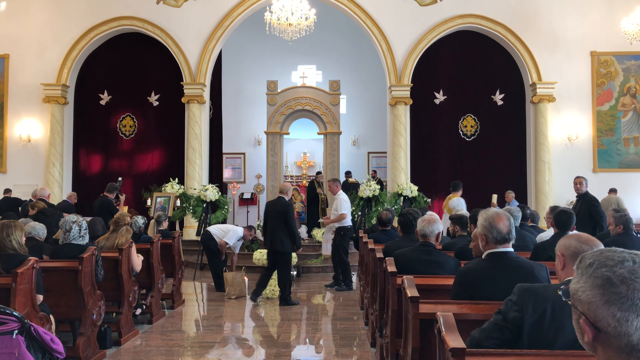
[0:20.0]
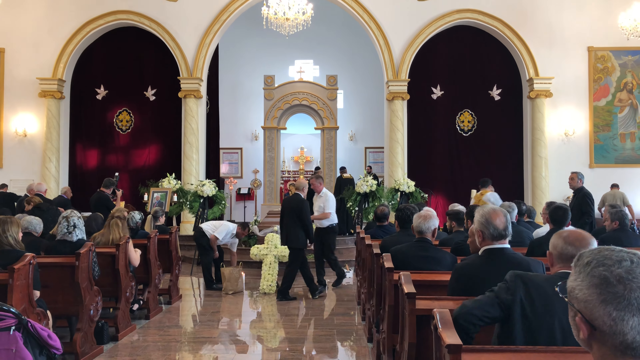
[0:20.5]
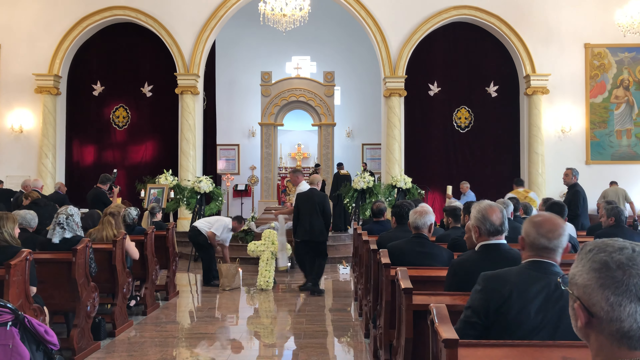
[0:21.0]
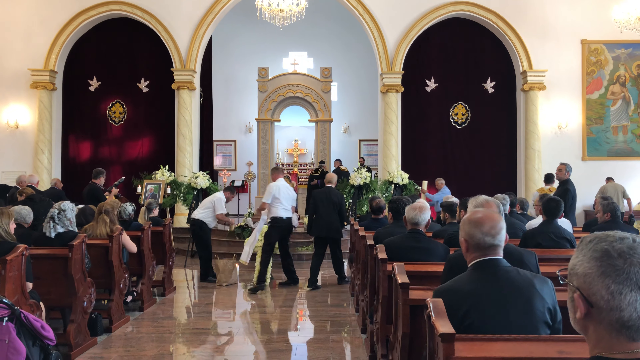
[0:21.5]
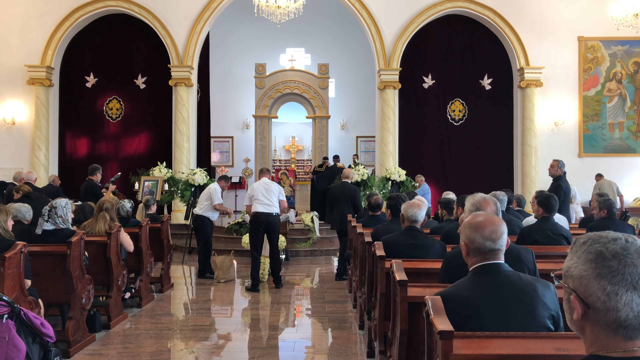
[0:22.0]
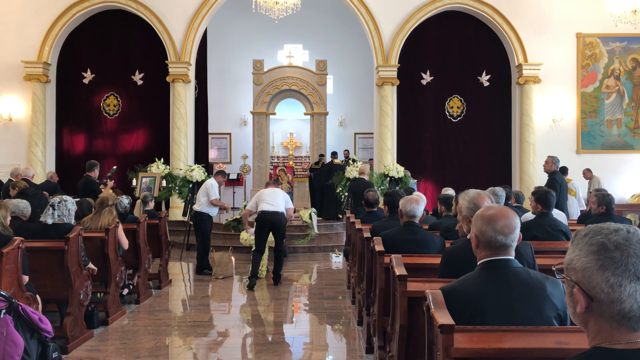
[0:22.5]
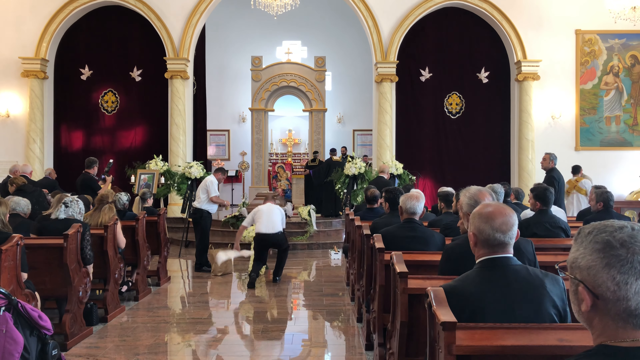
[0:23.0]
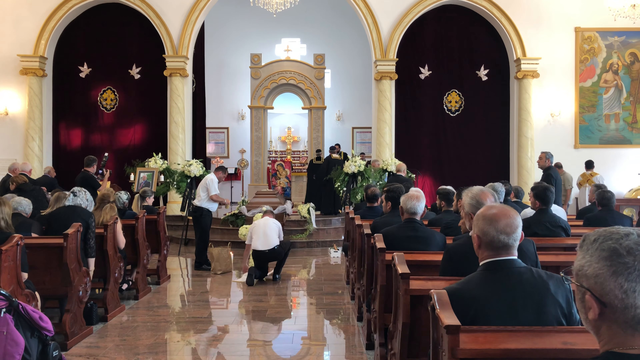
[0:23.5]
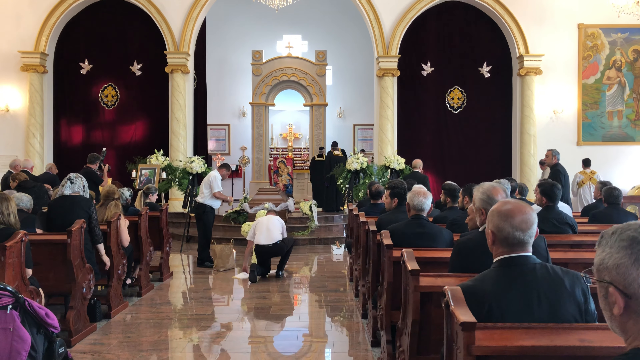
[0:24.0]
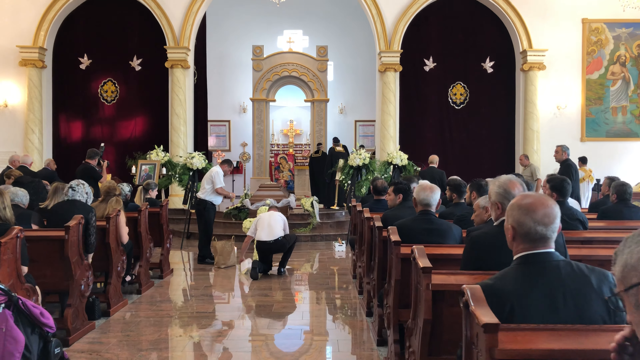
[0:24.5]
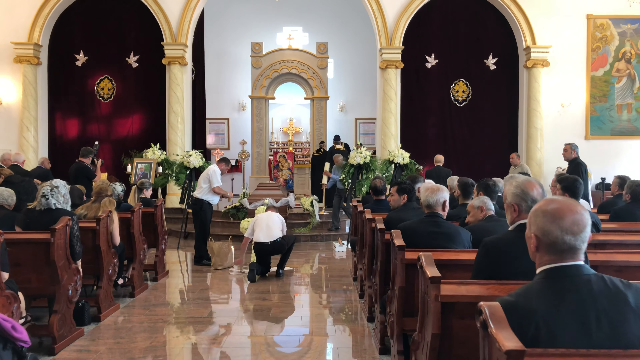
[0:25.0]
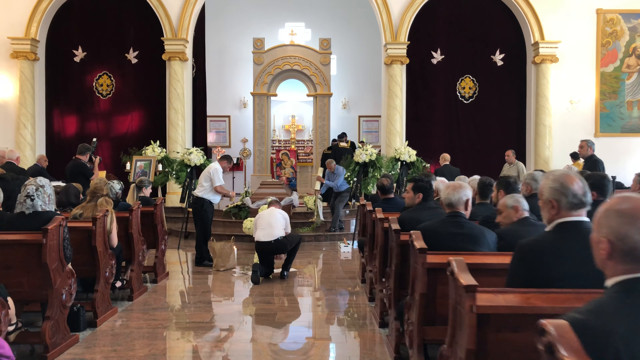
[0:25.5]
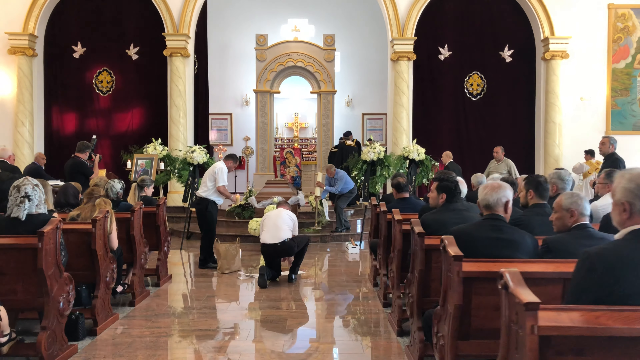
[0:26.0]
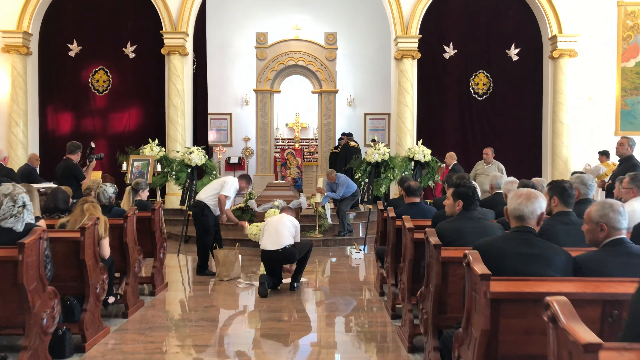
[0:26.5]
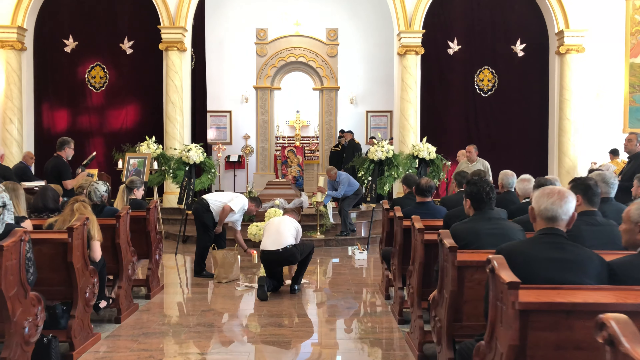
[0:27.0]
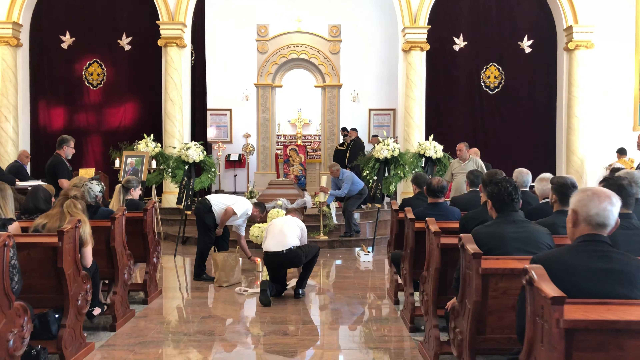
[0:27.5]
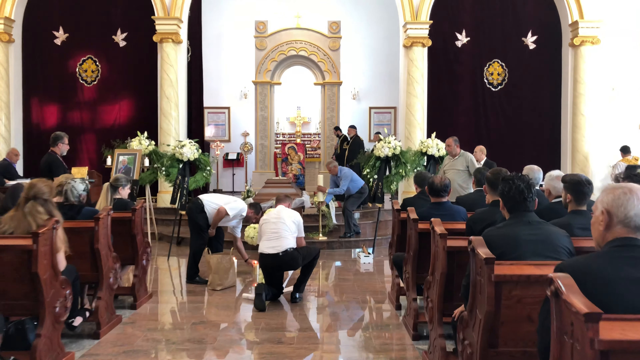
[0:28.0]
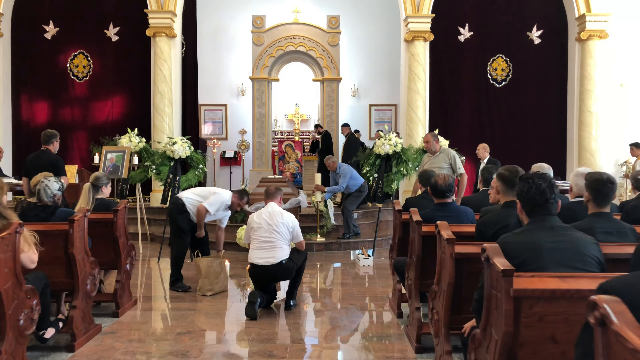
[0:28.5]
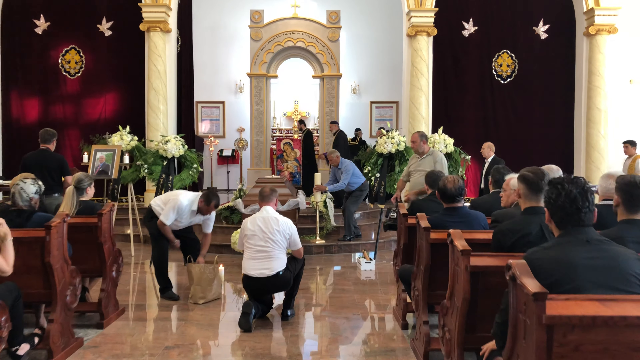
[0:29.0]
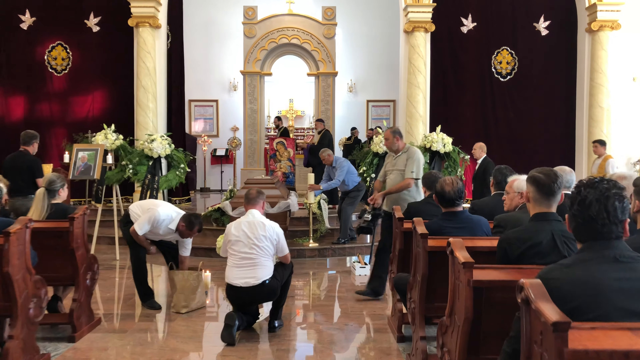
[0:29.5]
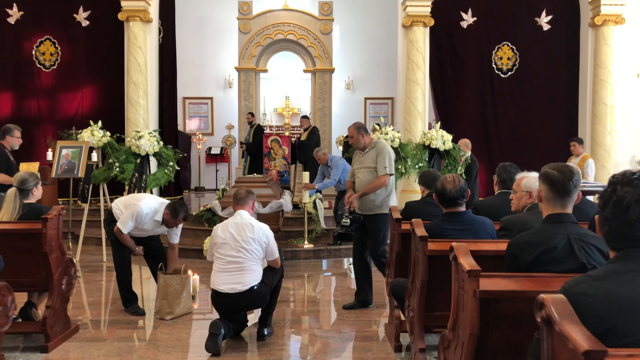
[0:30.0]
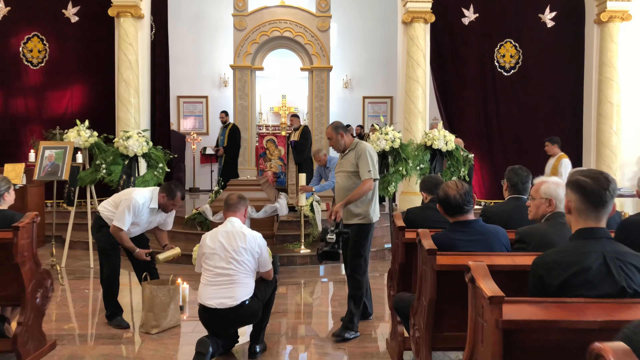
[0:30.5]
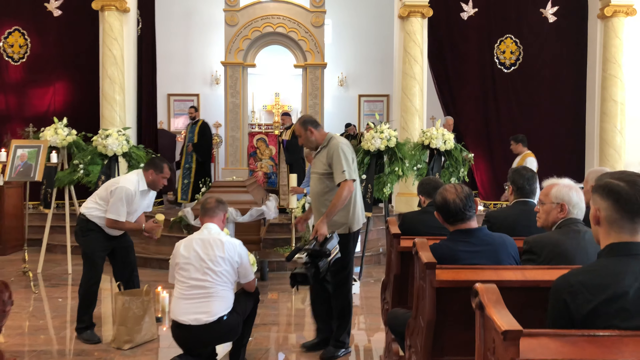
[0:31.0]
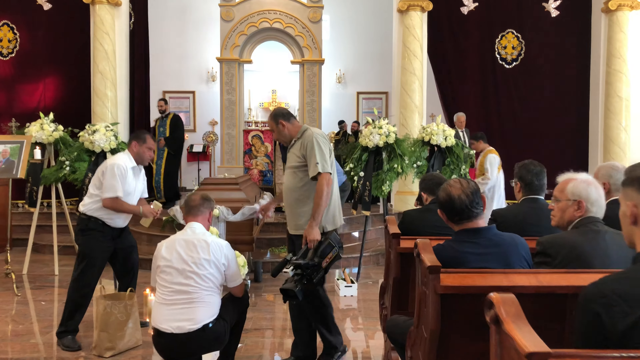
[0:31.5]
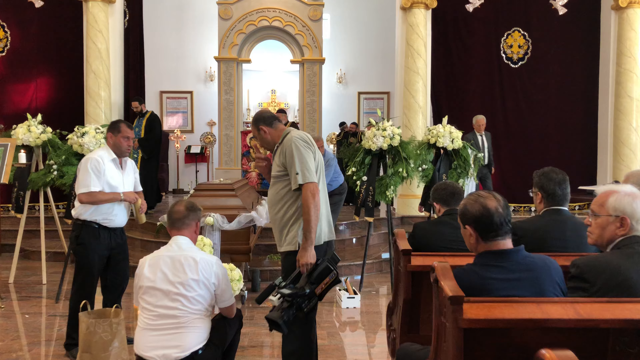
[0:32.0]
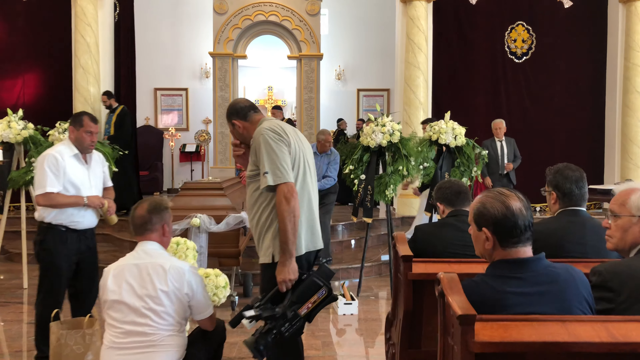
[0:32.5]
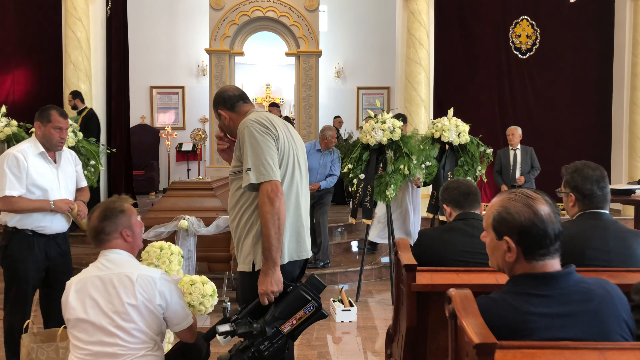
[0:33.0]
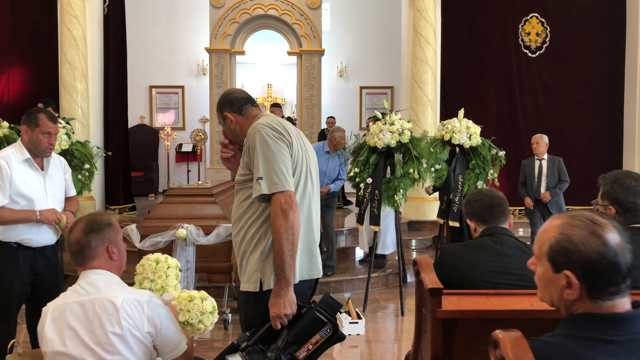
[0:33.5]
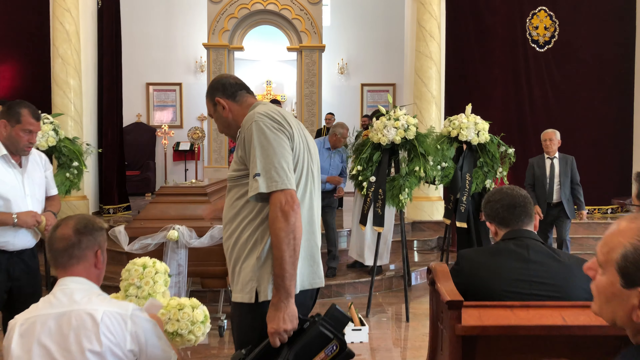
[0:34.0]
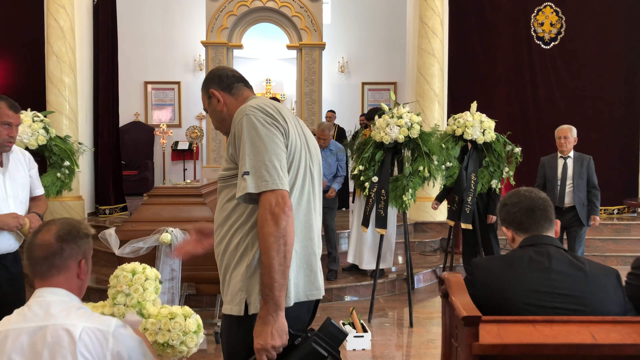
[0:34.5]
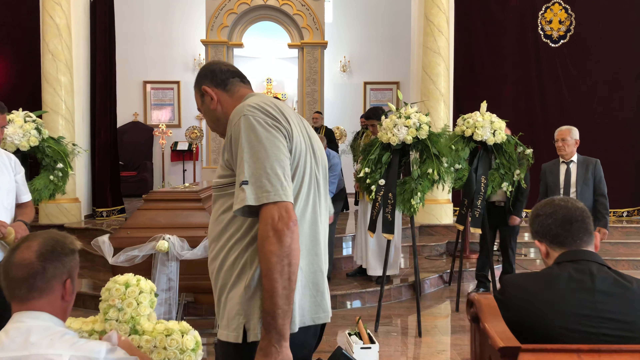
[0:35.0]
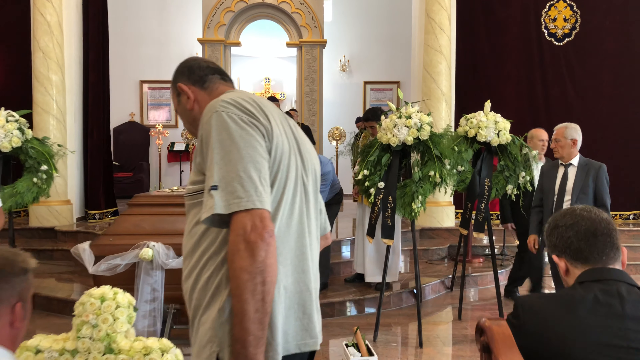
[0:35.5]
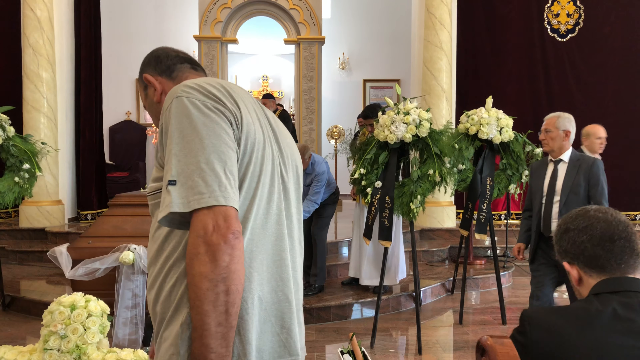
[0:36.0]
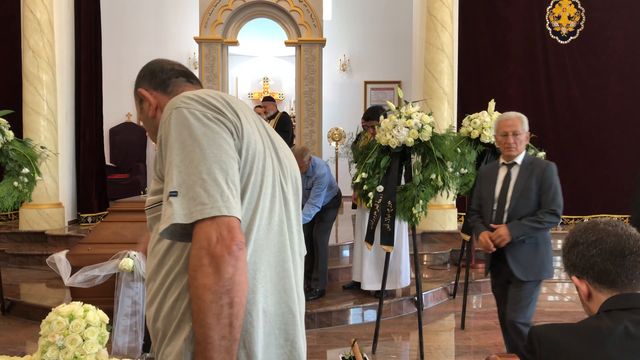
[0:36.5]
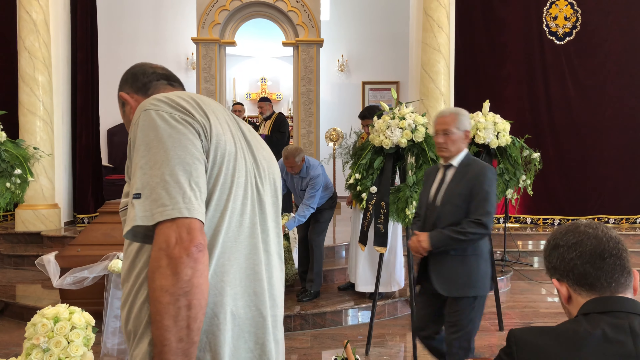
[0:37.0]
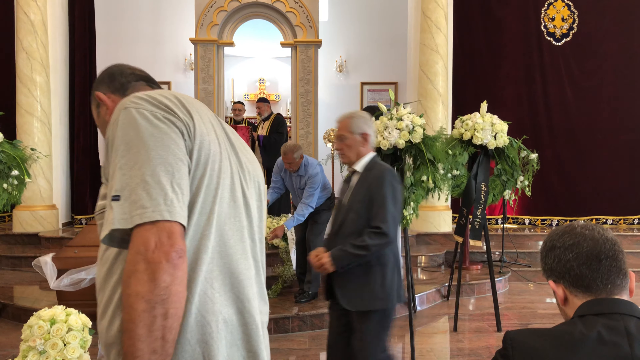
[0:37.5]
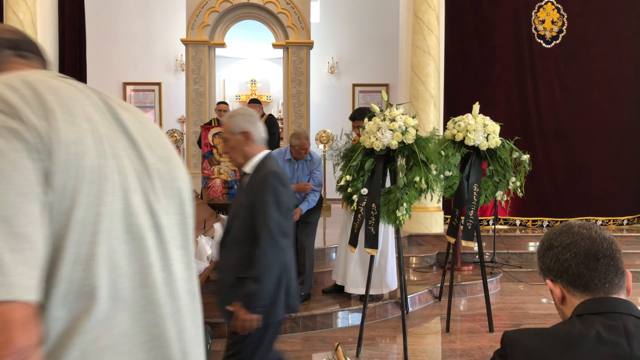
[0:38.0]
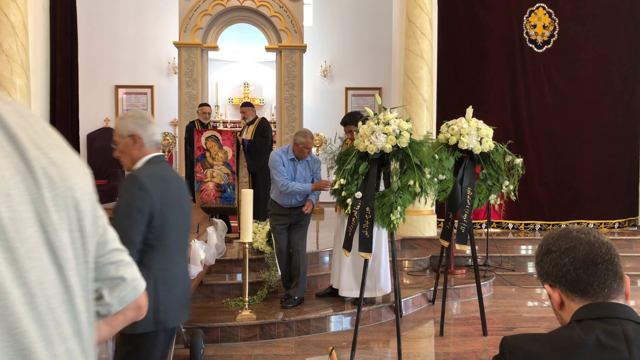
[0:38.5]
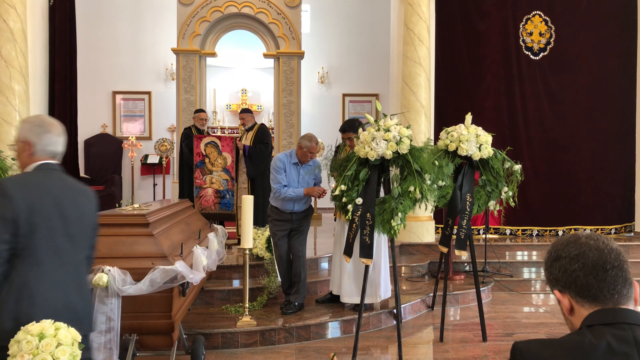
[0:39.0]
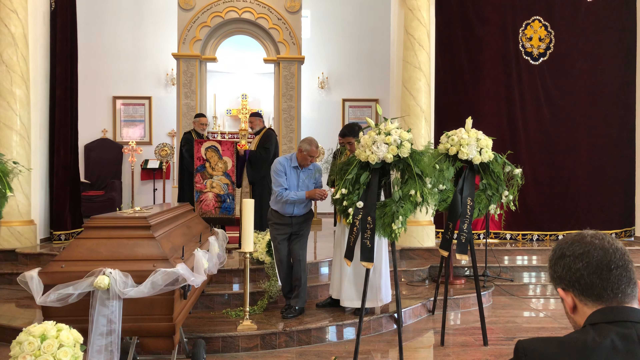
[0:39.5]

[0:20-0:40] The men at the front are shown with the cross made of flowers; there is a brown paper bag, and they are taking items out of it. A brown casket is visible at the front of the room, confirming it is a funeral, along with various floral arrangements. In front of the casket is a painting that appears to show maybe Mary and maybe Jesus. Based on the clergy's clothing, this is possibly a Catholic church or a similar denomination. The two men, who wear black pants and white shirts, seem to be setting up the floral cross as a decoration. A casually dressed man carries a large video camera, so the funeral is probably going to be videotaped.